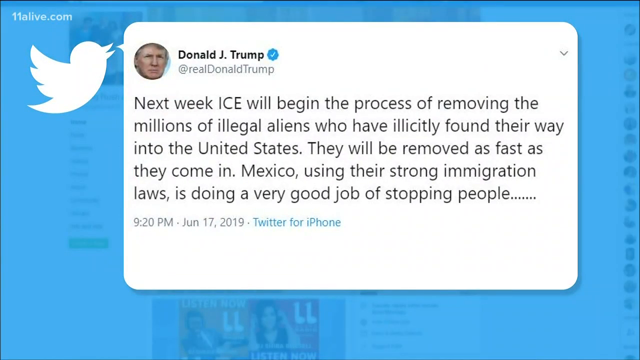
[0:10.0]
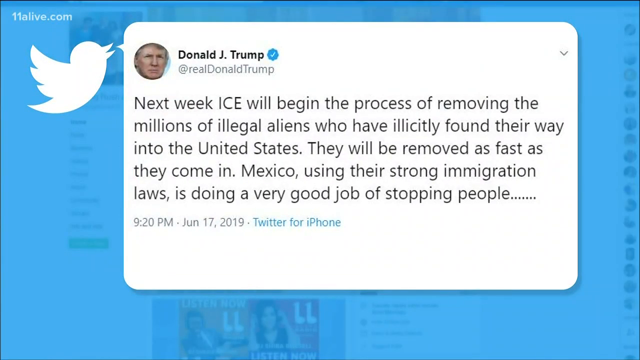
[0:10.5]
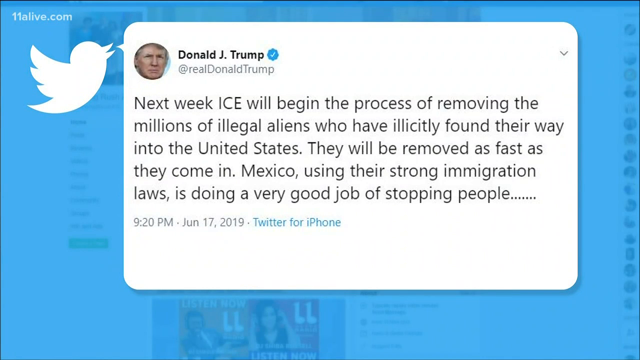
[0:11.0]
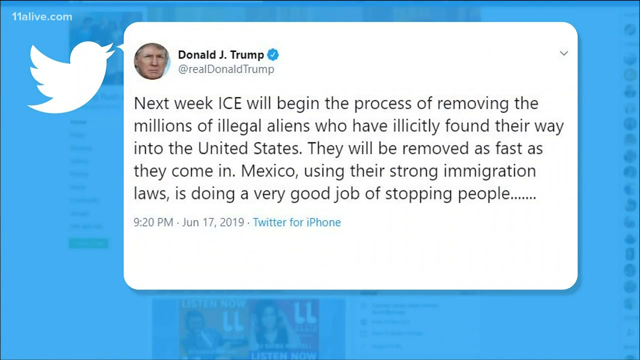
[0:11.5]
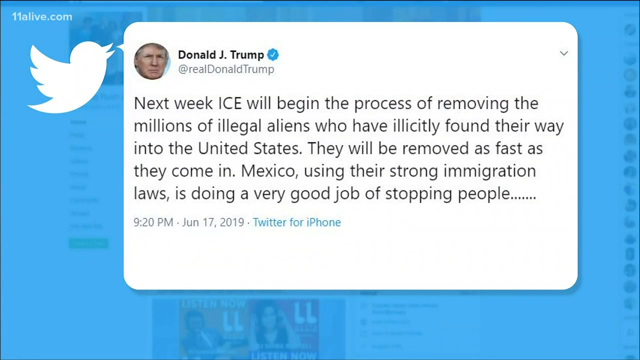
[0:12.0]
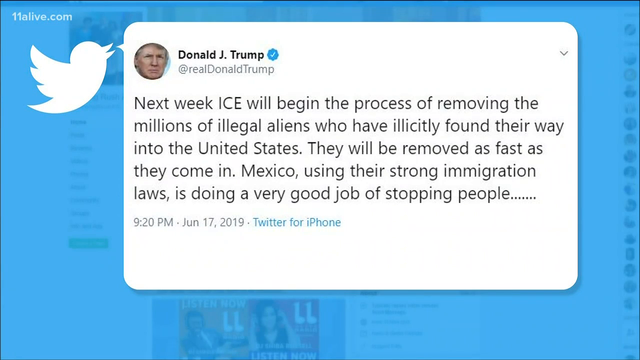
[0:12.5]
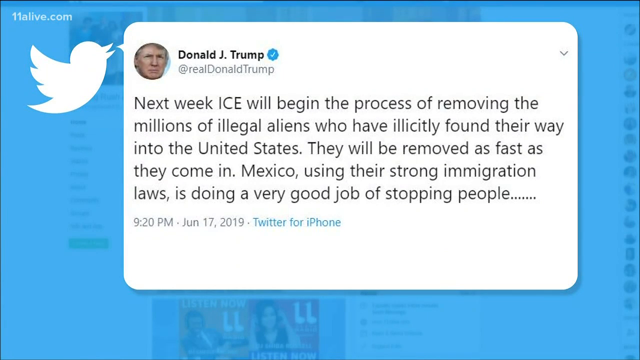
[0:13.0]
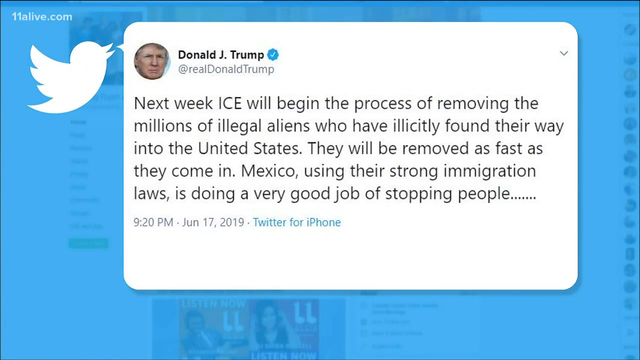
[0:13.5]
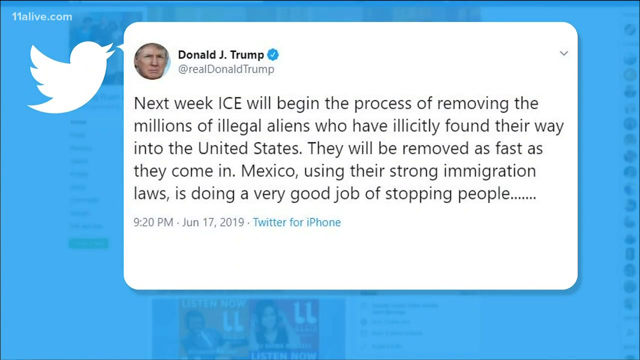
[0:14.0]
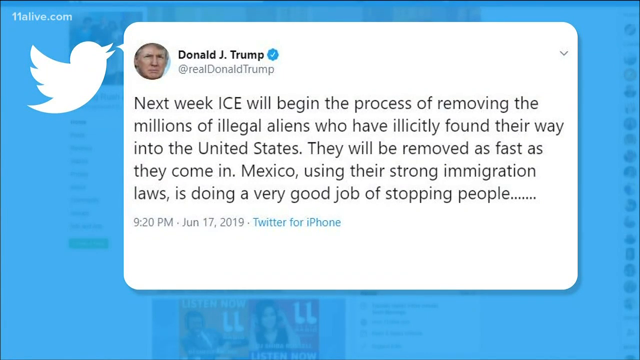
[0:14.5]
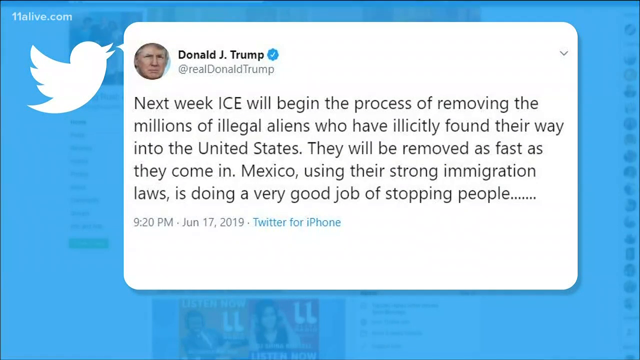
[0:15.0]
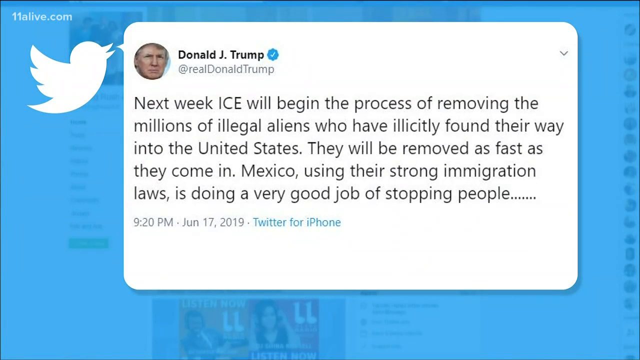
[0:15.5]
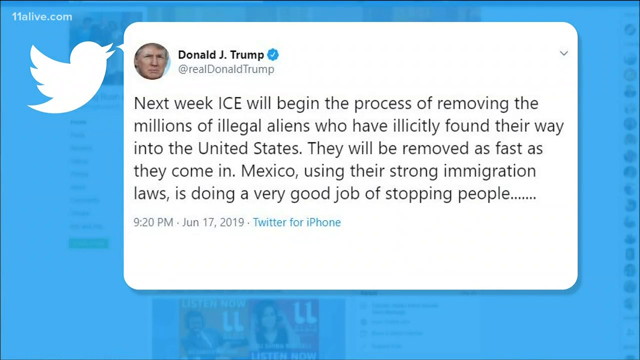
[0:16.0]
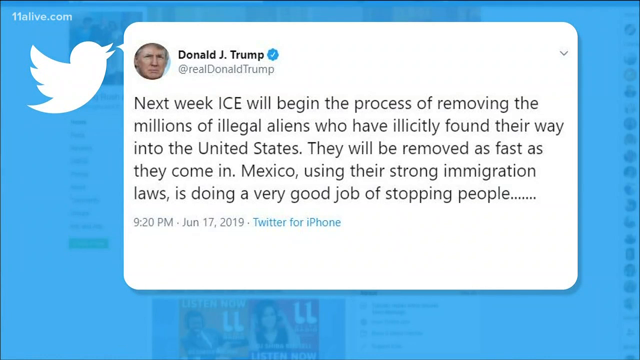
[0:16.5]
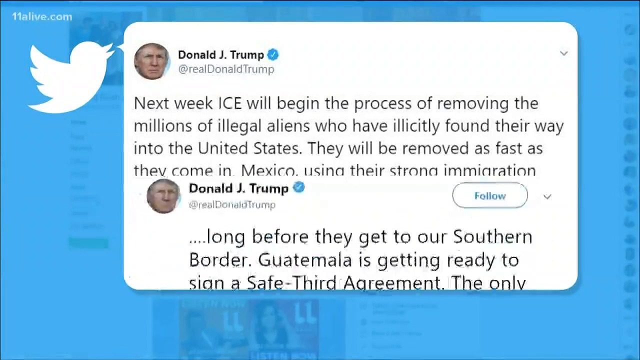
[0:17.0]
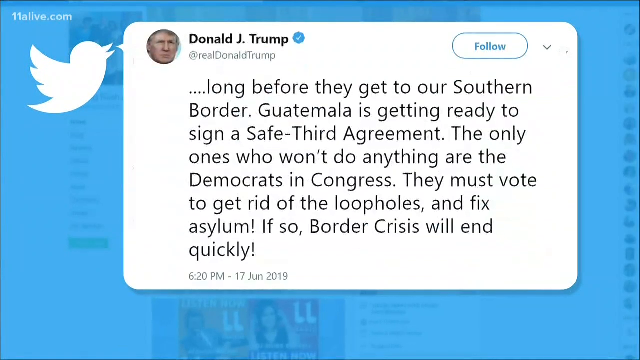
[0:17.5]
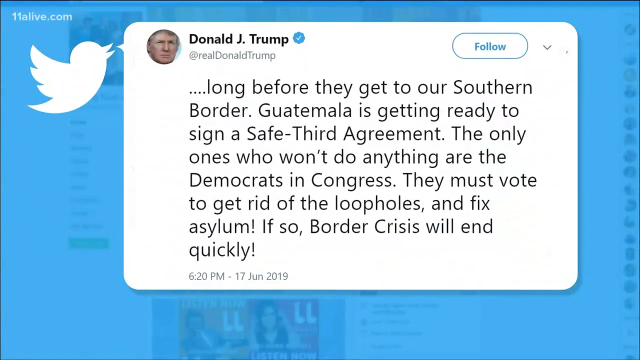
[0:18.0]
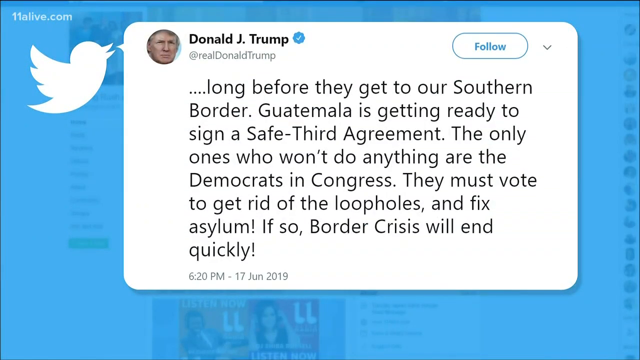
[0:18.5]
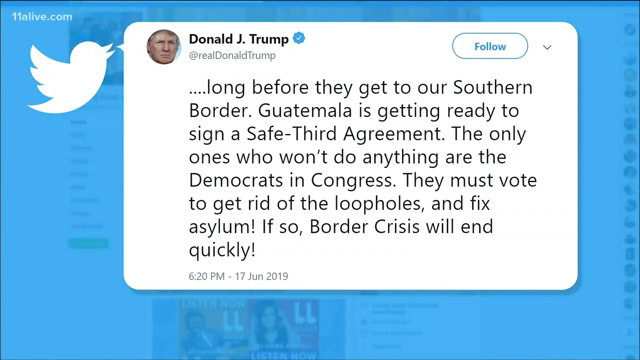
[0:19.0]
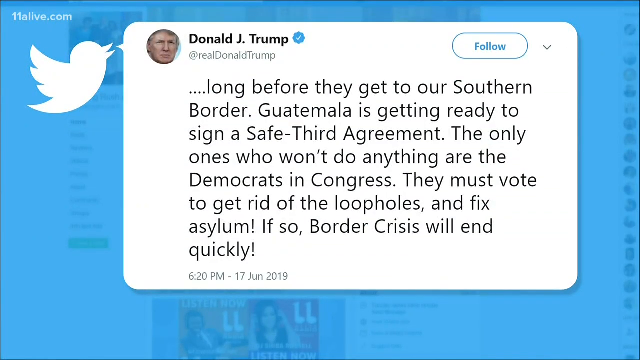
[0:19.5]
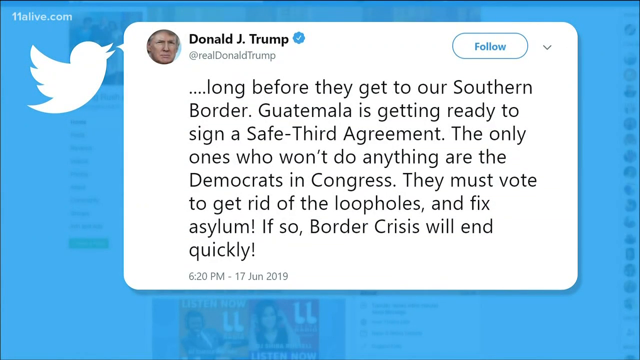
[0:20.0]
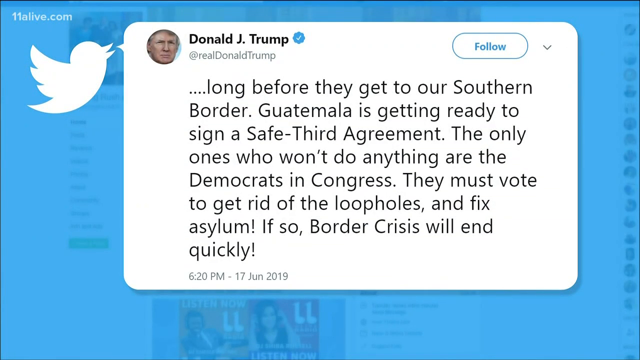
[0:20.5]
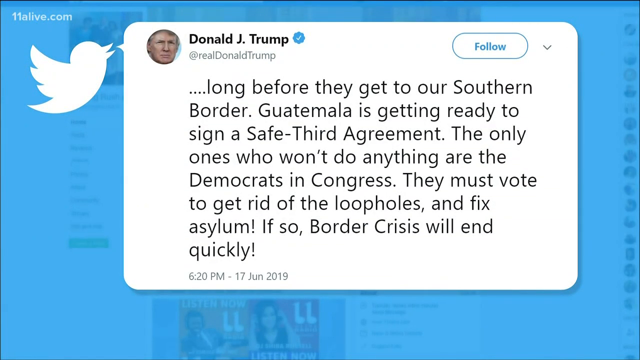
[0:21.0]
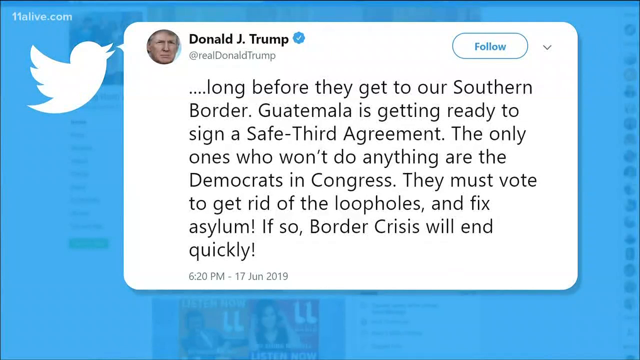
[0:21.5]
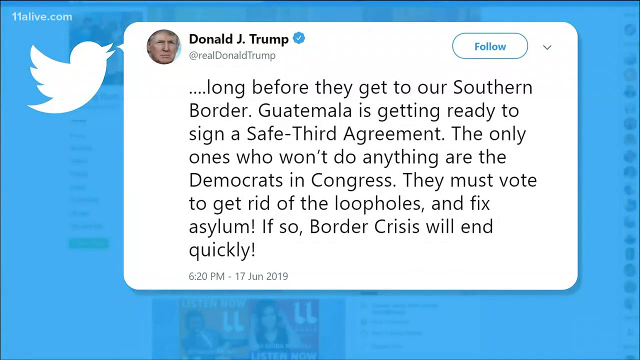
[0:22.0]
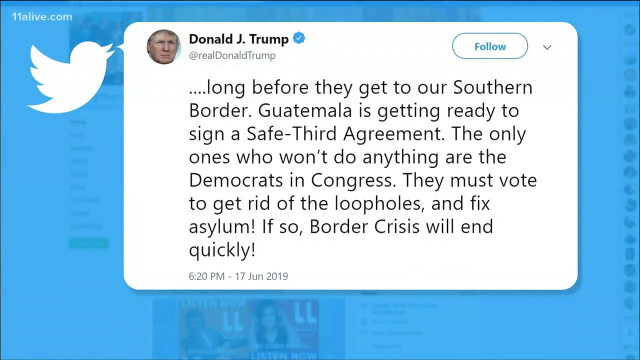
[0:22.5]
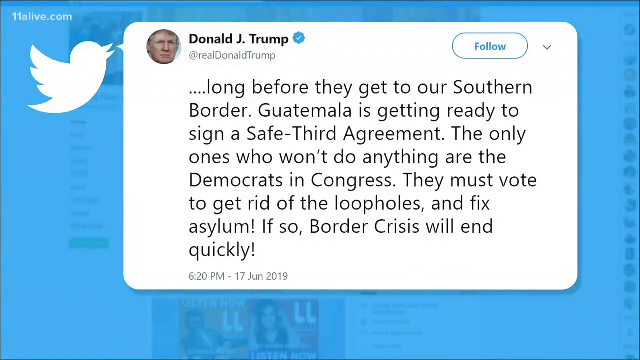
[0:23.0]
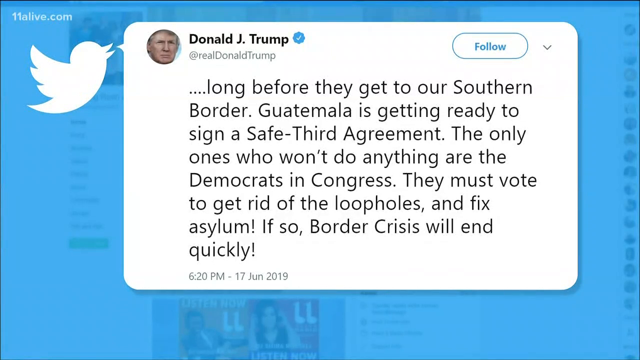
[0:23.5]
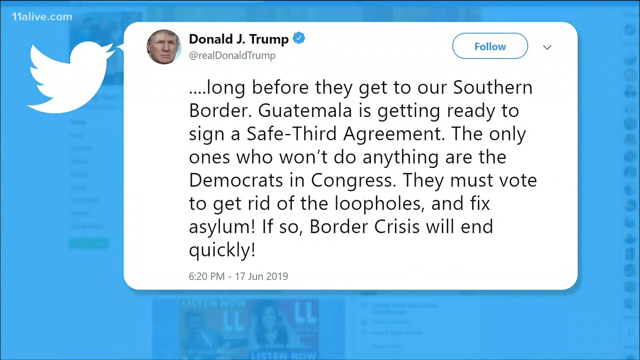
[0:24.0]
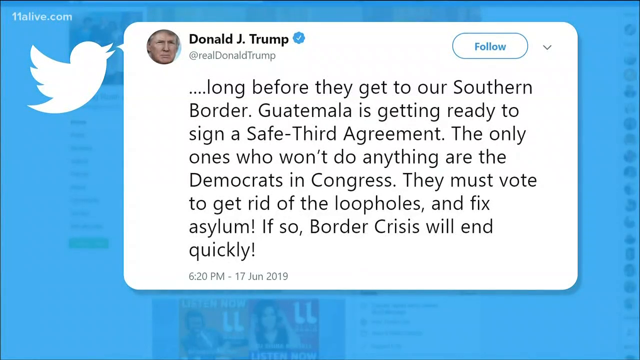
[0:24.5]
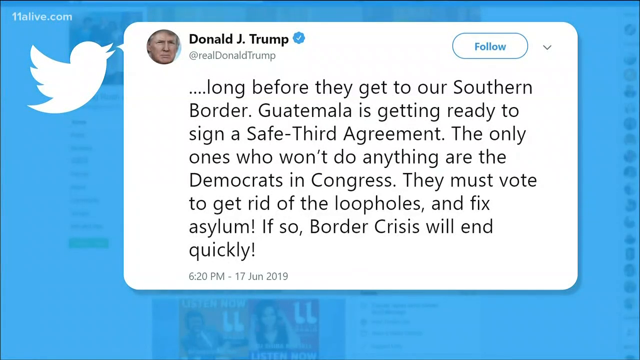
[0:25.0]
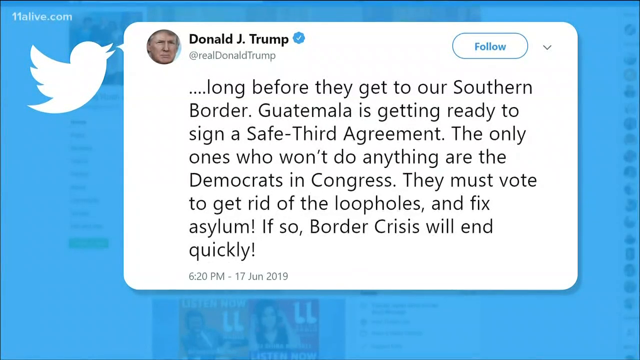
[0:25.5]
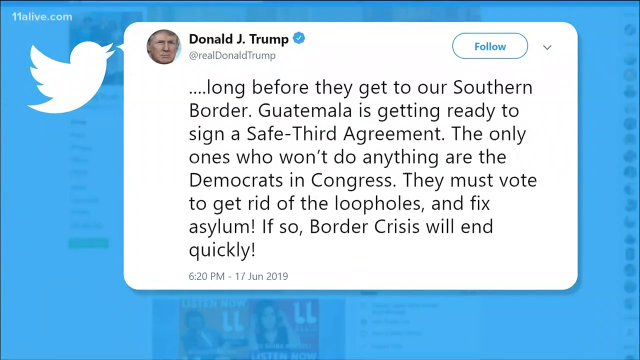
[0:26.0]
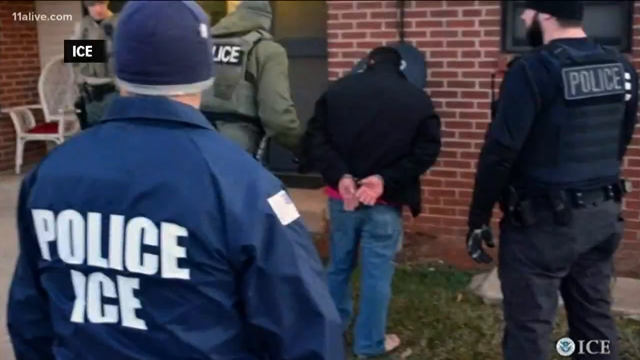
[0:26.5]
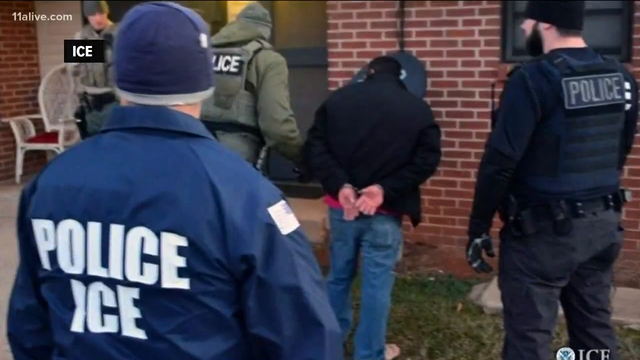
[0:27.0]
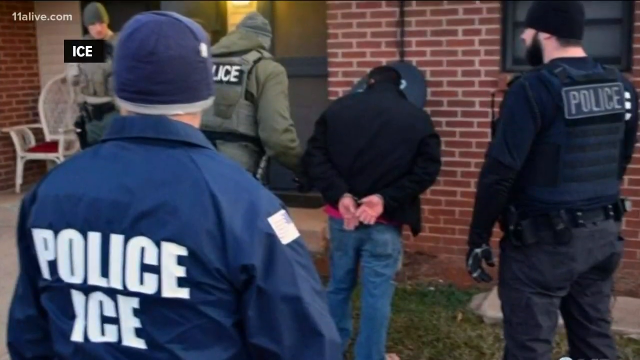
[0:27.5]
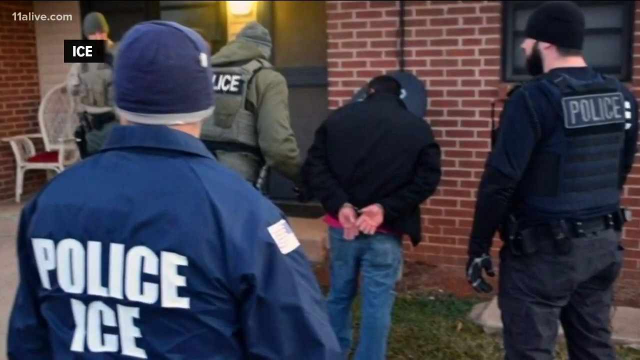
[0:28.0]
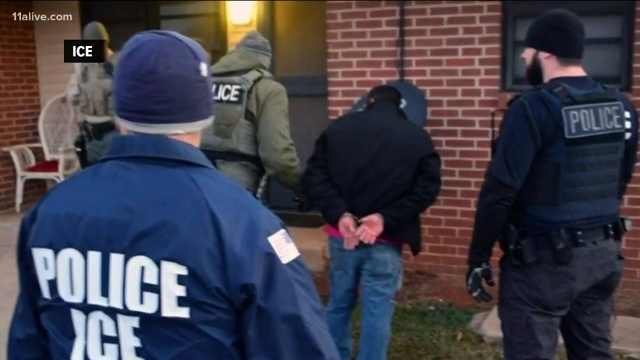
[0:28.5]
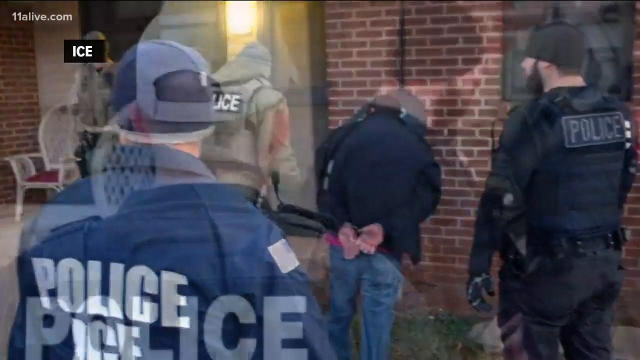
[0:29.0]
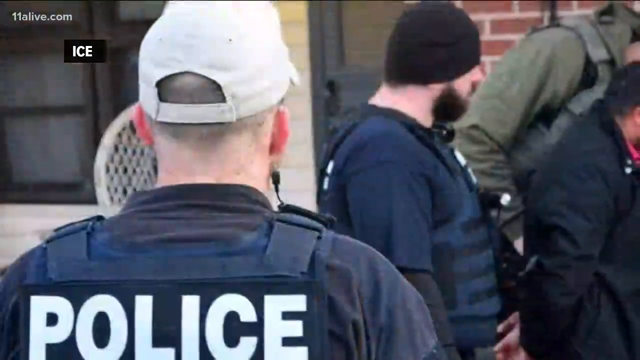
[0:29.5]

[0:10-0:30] A post from Donald Trump dated June 17th, 2019 is shown, with at least two different tweets on the subject, along with the white Twitter bird. Another photo shows ICE arresting somebody, with ICE on the uniform. The tweet reads: "next week, ICE will begin the process of removing millions of illegal aliens who have illicitly found their way into the United States. They will be removed as fast as they come in. Mexico, using their strong immigration laws, is doing a very good job of stopping people." It continues in the next tweet: "long before they get to our southern border, Guatemala is getting ready to sign a safe third agreement. The only ones who won't do anything are the Democrats in Congress. They must vote to get rid of the loopholes and fix asylum. If so, border crisis will end quickly."